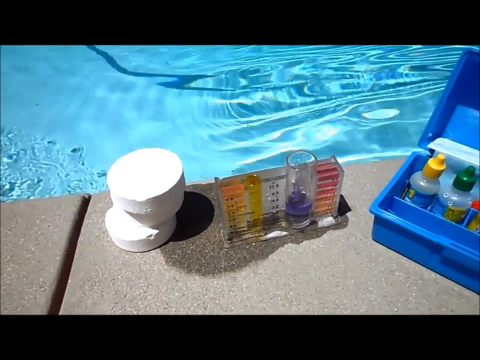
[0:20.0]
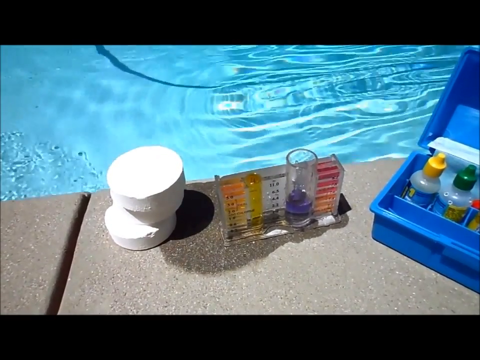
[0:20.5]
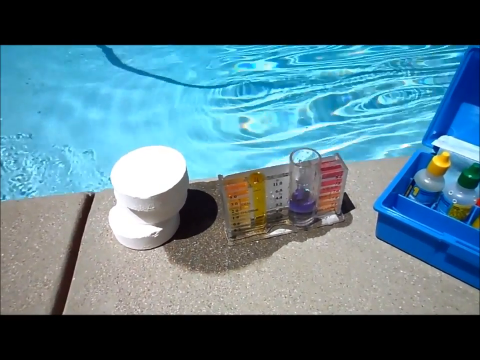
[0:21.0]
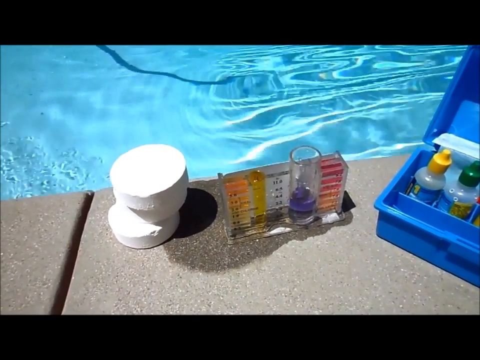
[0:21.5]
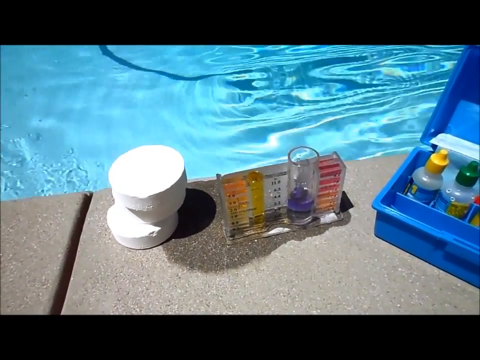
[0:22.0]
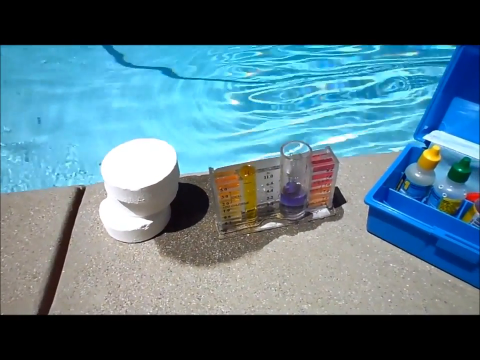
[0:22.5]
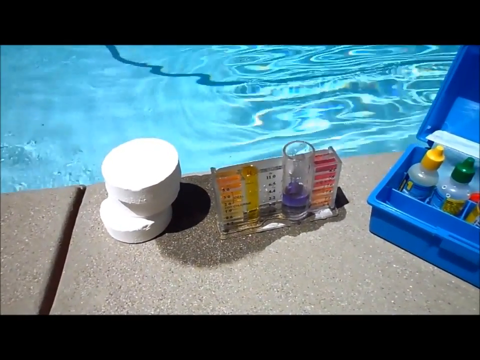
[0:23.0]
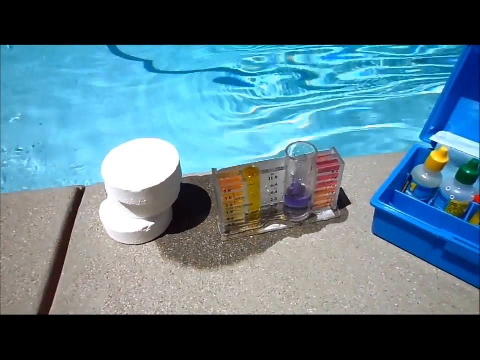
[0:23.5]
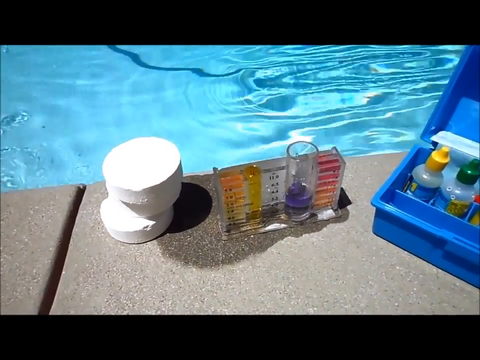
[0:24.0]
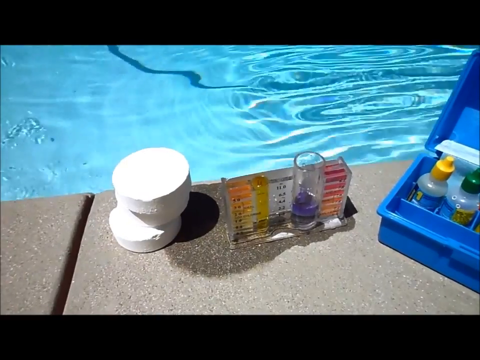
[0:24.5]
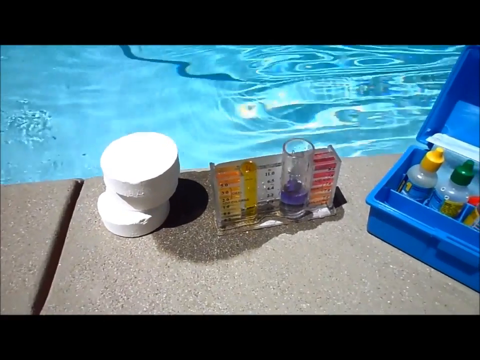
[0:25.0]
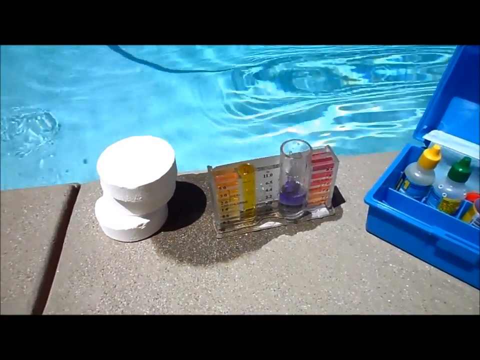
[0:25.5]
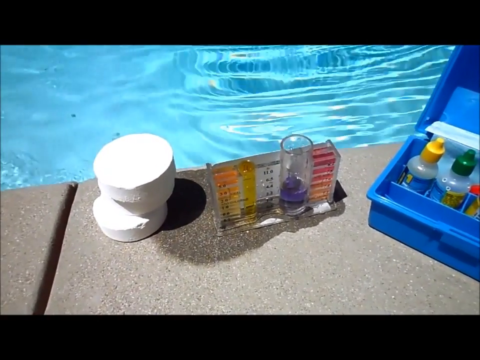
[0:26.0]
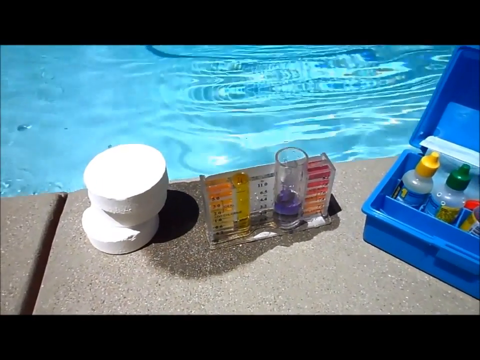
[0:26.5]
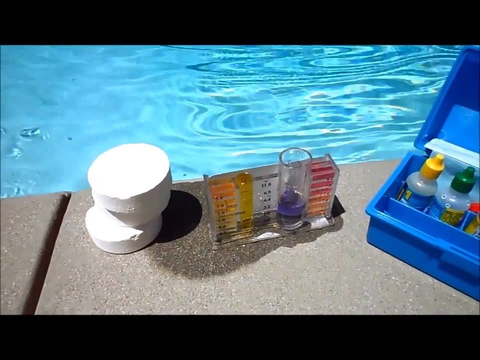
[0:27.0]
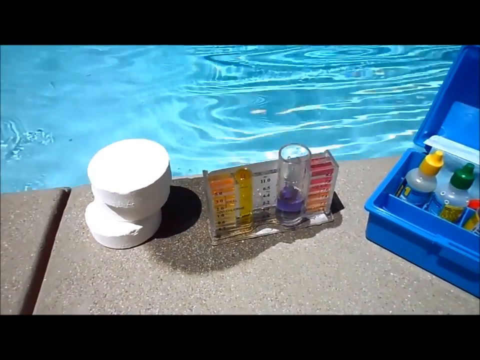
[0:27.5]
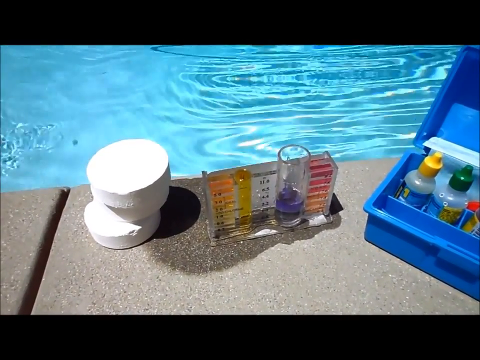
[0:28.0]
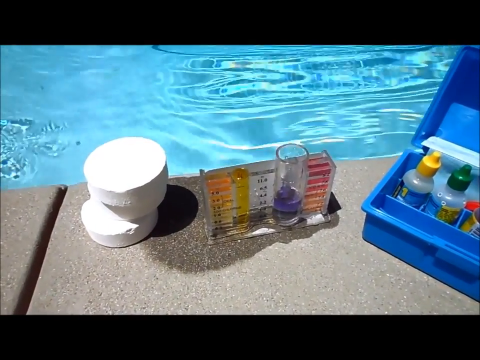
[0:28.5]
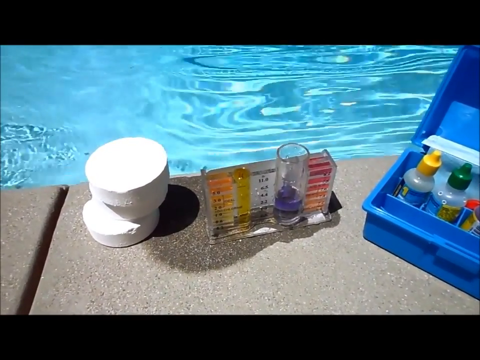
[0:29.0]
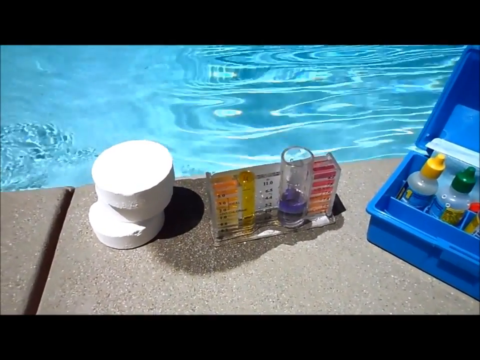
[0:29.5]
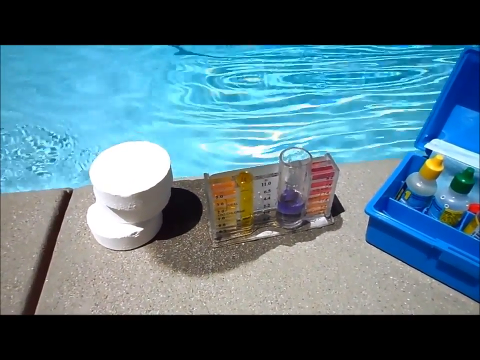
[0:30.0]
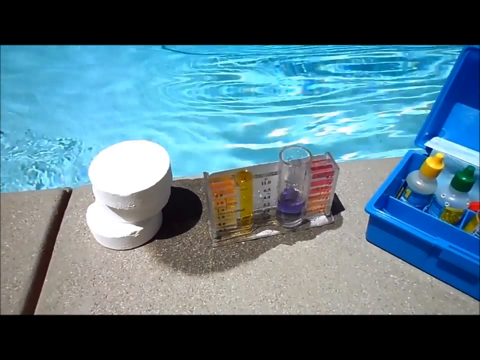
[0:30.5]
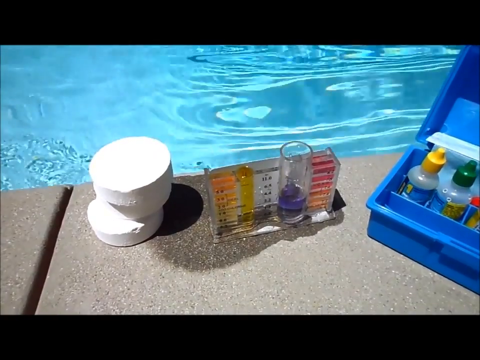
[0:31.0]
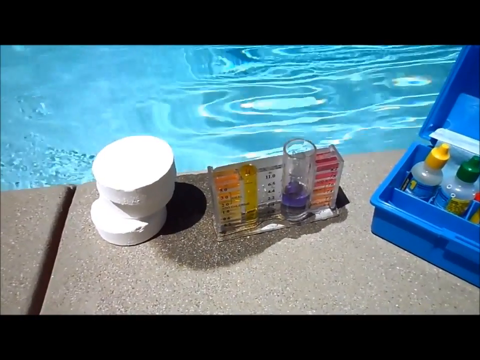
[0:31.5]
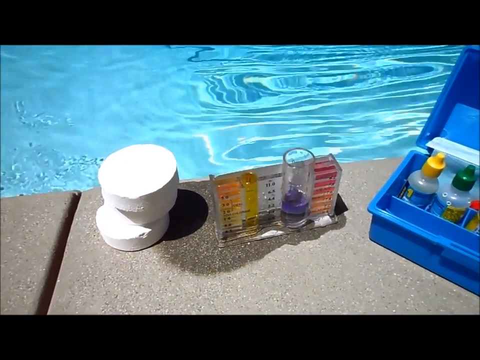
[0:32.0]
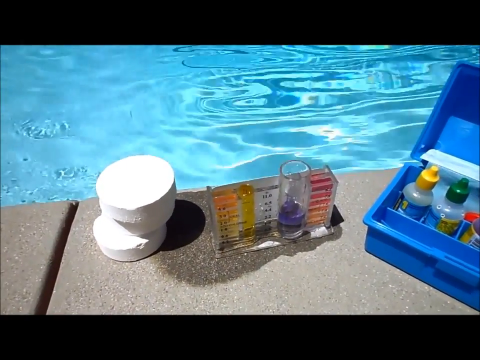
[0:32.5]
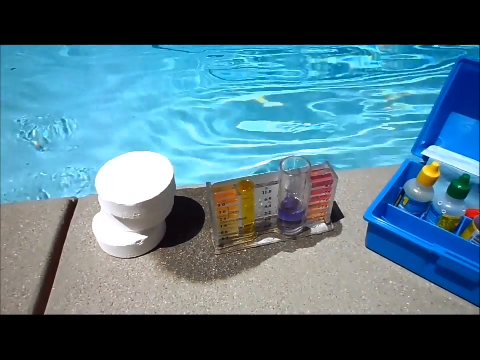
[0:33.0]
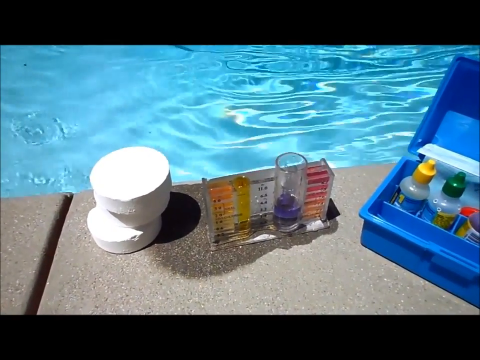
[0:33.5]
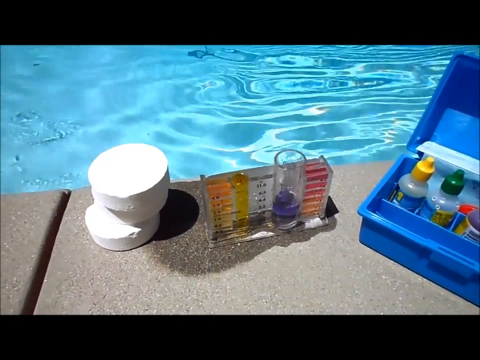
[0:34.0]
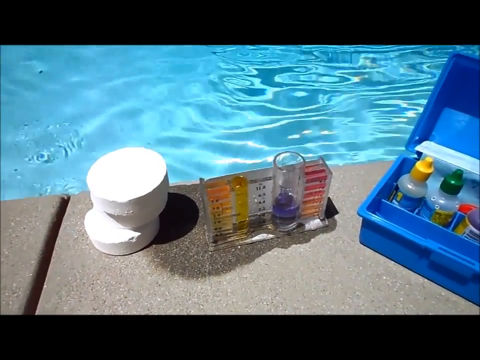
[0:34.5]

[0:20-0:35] The shot stays focused on the same three sets of chemicals on the side of the pool, with the camera shaking a little. Only the chemicals, the pool and the side of the pool are visible; the man's hand does not come into view and there are no people. The water is in the background and it is bright and sunny. The shadow of the chlorine is visible on the right-hand side. What looks like water has splashed up underneath the middle item, which looks like the part that measures the different chemicals. On the right, partly out of frame, is a small blue box that almost looks like a tackle box, open, with various bottles in it. Two bottles are clearly visible, one with a yellow cap and one with a green cap, and there is at least one more, likely a couple more. There appear to be labels around them, but what they say cannot be made out.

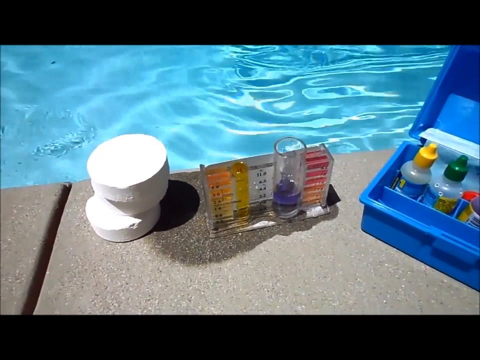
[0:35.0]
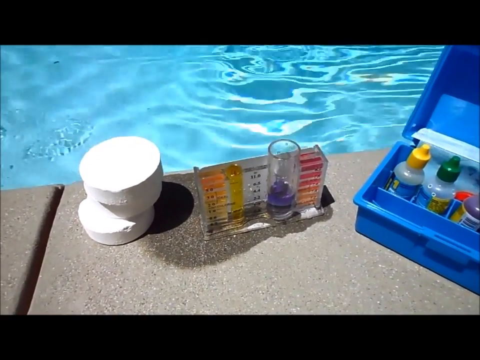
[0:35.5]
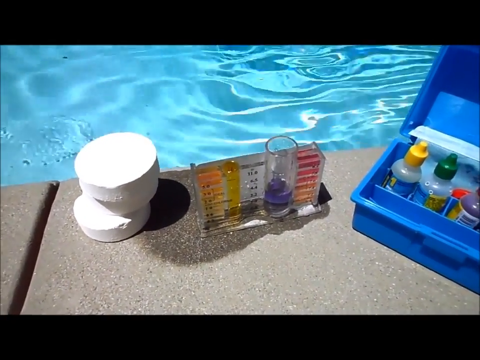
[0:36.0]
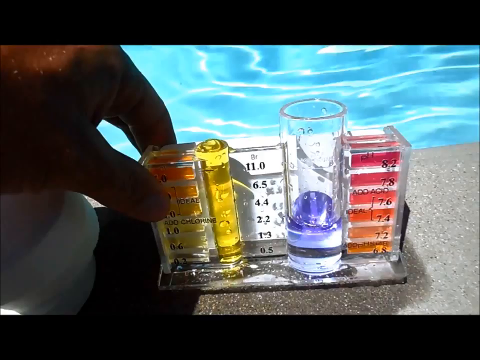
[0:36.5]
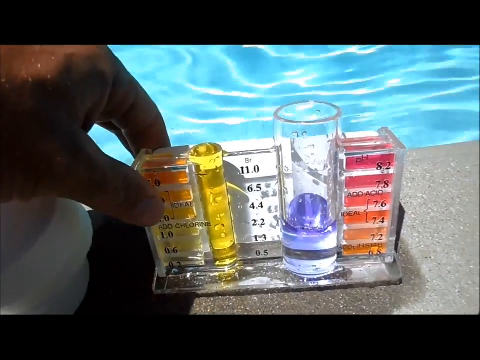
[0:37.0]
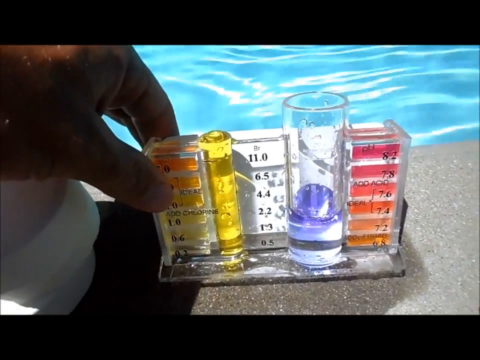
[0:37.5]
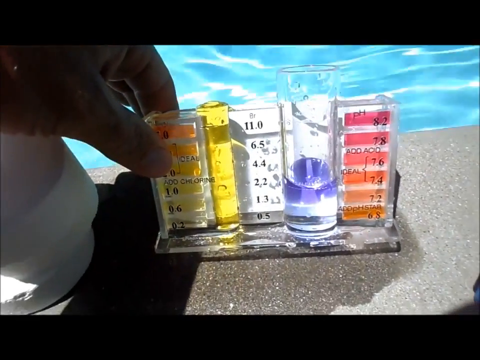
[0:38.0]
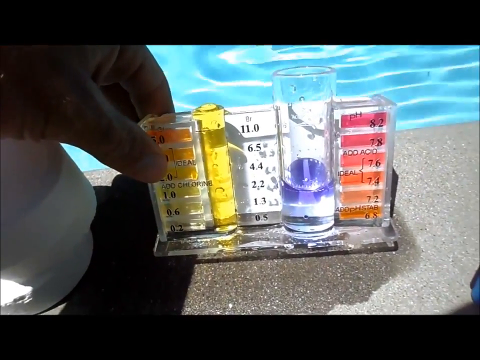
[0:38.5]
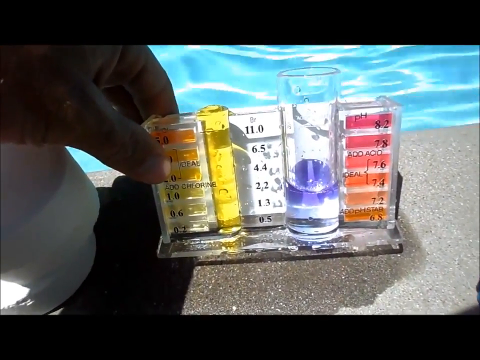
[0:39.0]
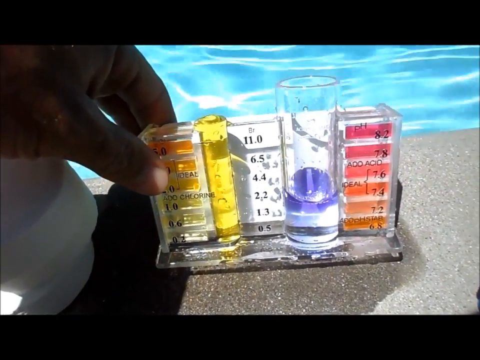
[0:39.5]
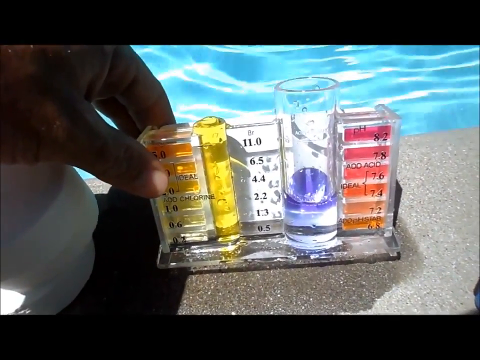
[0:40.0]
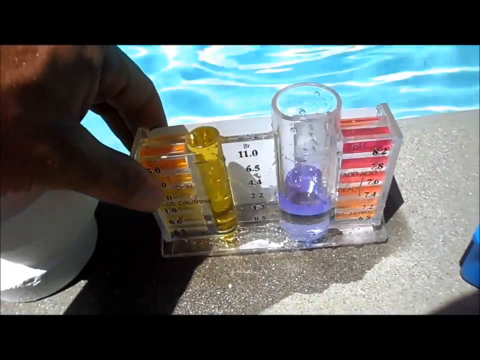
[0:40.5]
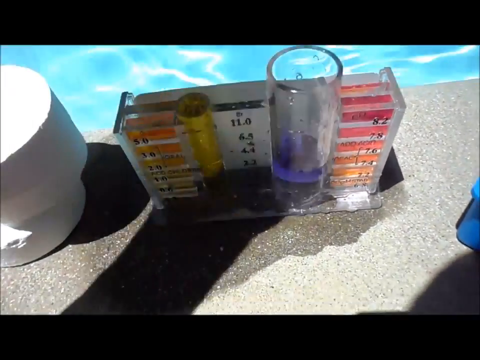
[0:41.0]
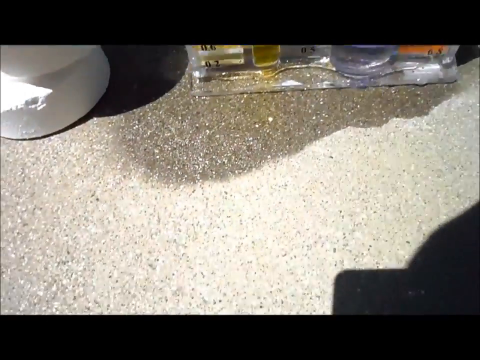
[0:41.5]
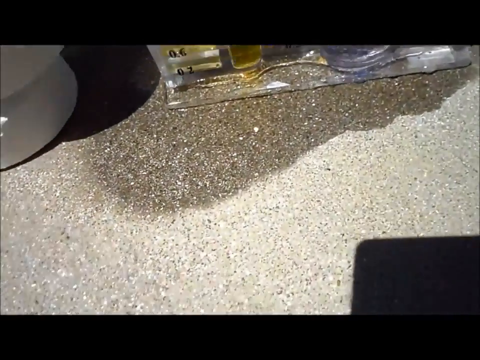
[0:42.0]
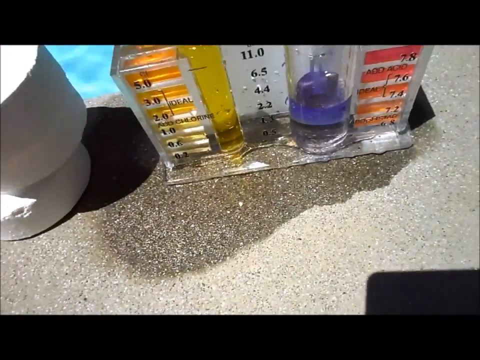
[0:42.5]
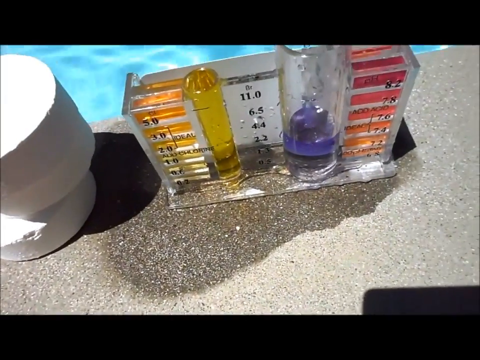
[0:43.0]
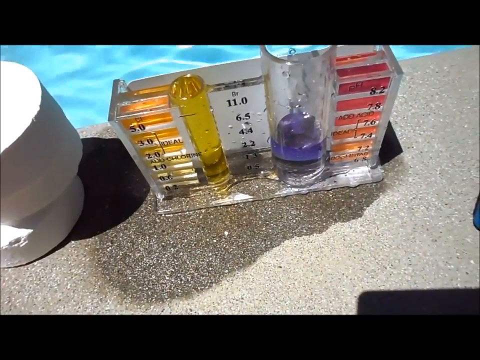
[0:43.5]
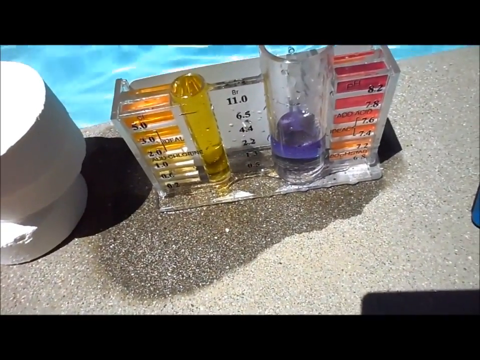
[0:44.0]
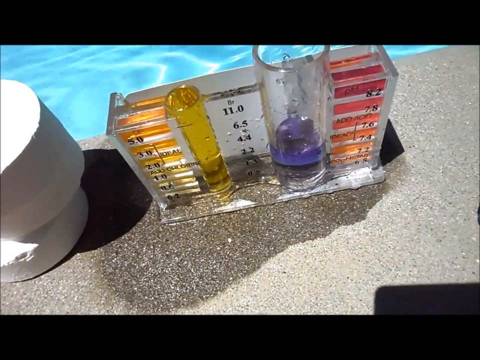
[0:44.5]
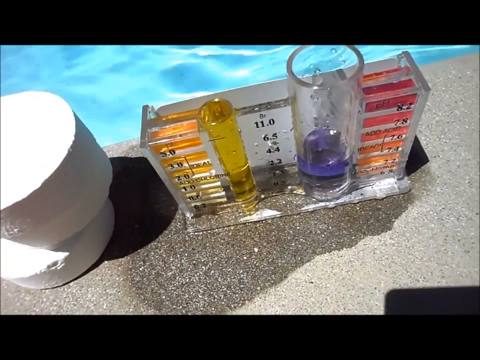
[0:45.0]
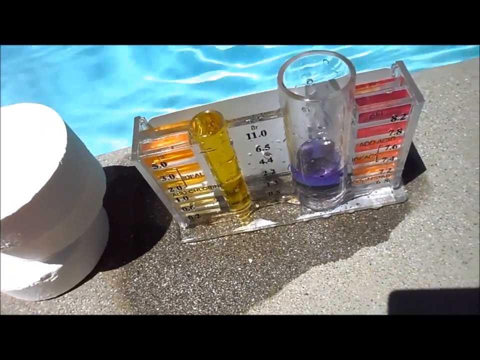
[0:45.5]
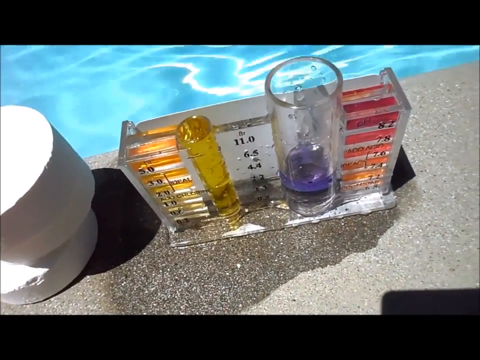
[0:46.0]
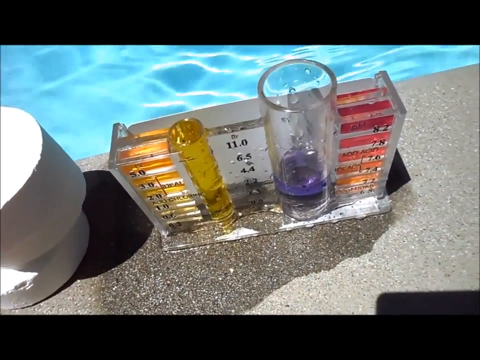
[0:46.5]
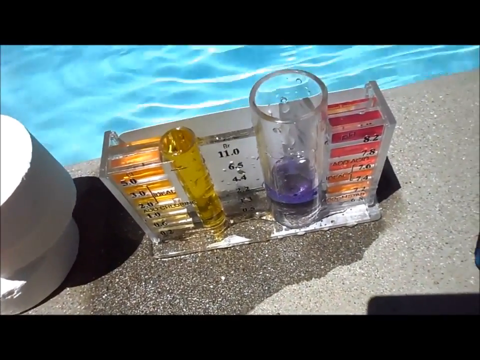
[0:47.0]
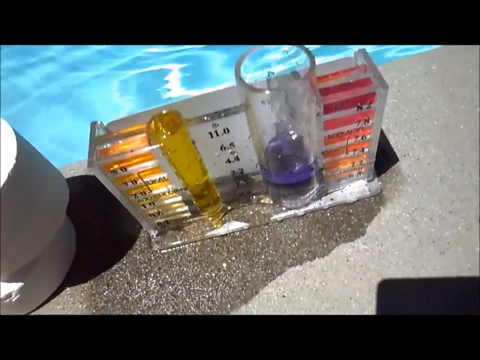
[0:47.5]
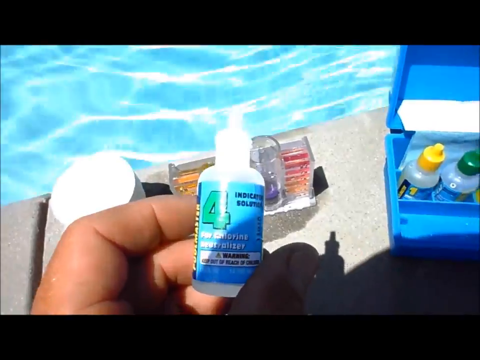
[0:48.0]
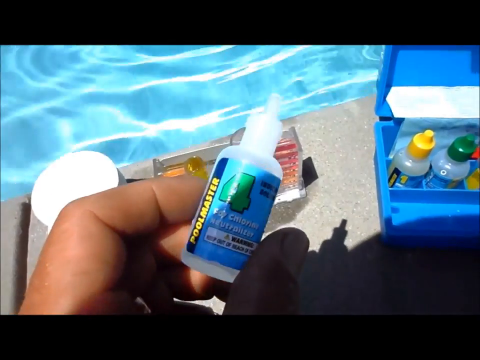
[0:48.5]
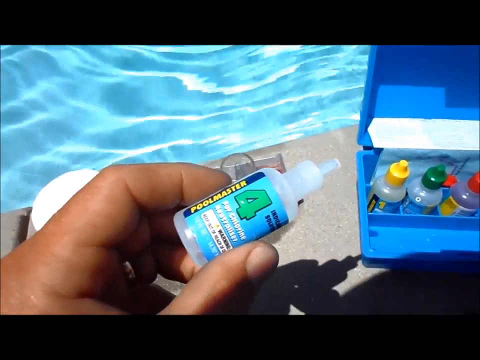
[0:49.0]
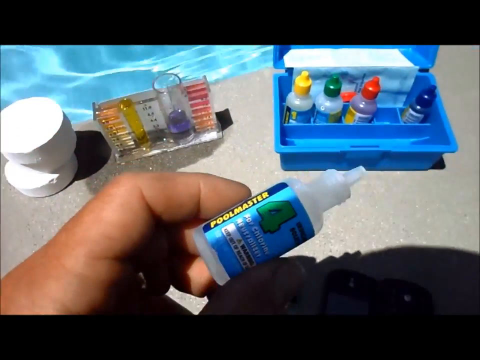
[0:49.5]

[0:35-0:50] The shot first shows the three chemicals along the side of the pool. It then cuts to the man holding in his left hand what looks like one of the smaller chemical bottles, very close to the camera; it says number four on it. The bottle is very small and fits easily in his hand. His shadow is visible behind him as he moves the bottle a little toward himself. The video then quickly cuts to the chemical reader, which the man holds with his left hand, tilting it back slightly to show it.